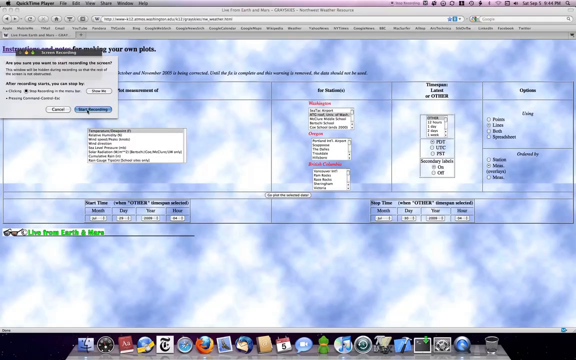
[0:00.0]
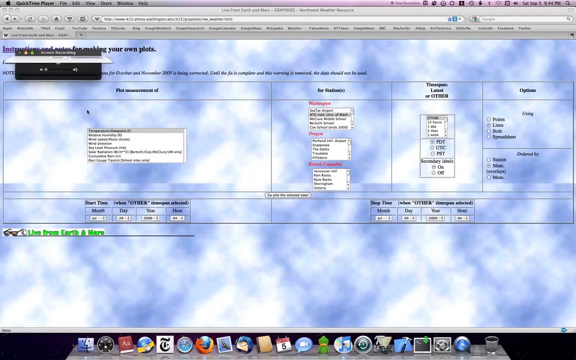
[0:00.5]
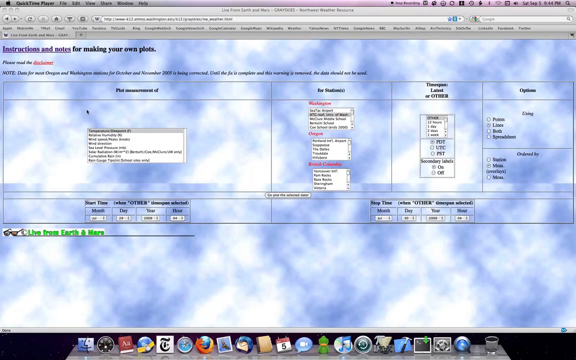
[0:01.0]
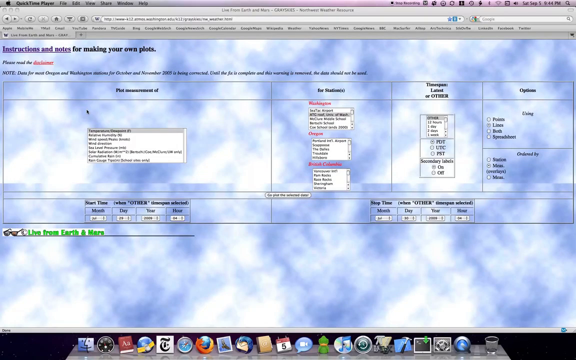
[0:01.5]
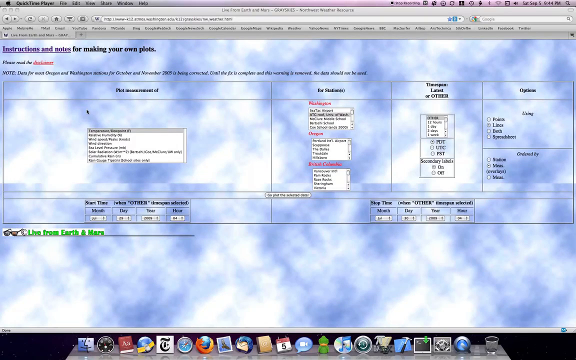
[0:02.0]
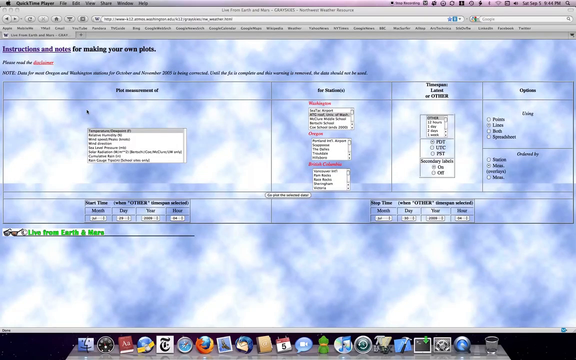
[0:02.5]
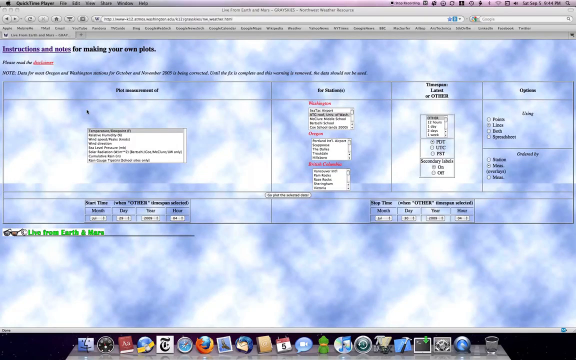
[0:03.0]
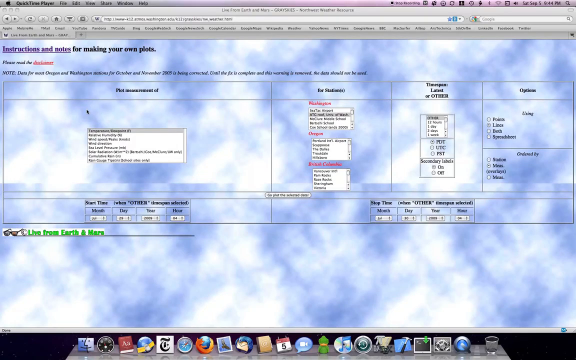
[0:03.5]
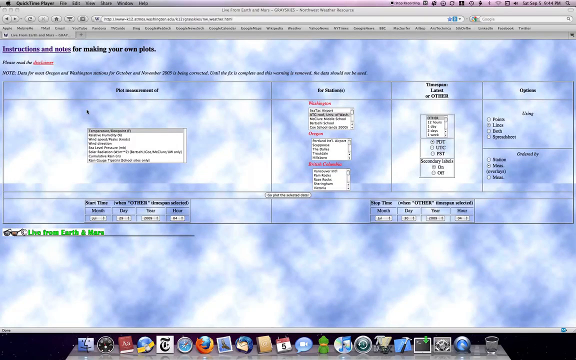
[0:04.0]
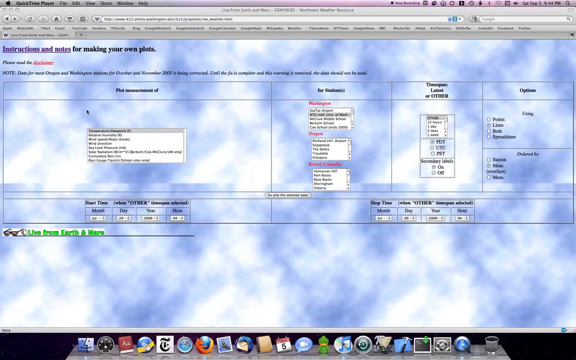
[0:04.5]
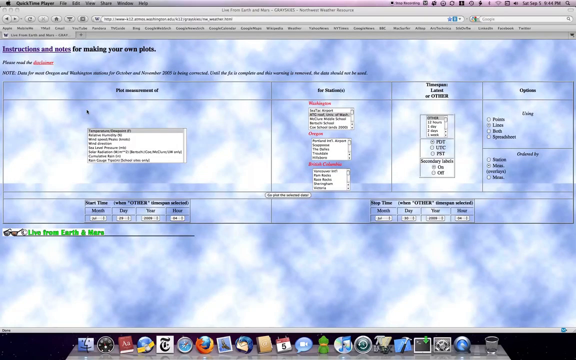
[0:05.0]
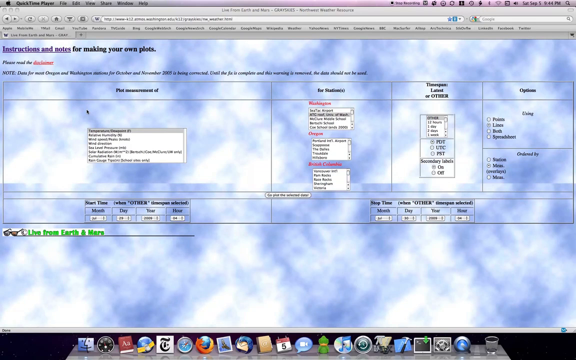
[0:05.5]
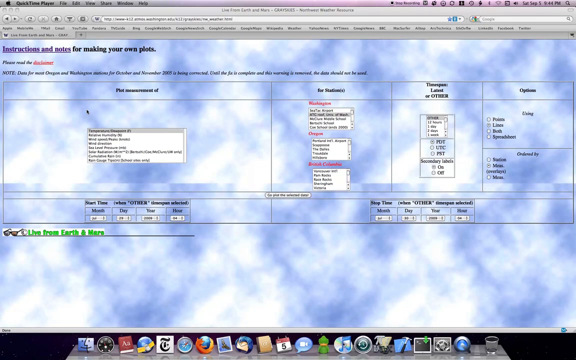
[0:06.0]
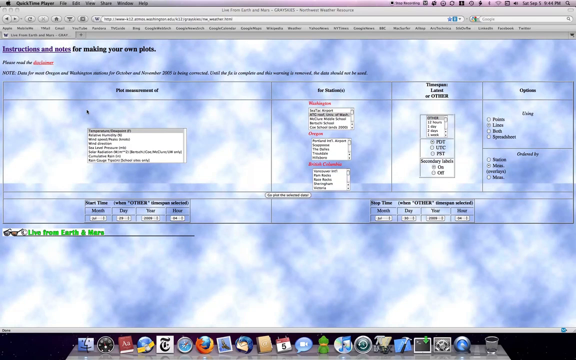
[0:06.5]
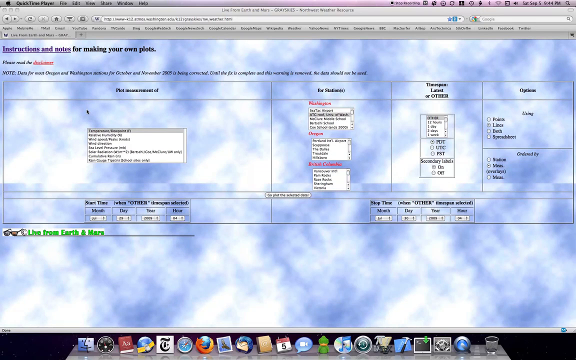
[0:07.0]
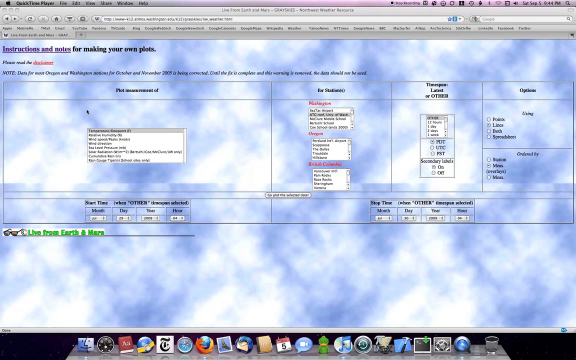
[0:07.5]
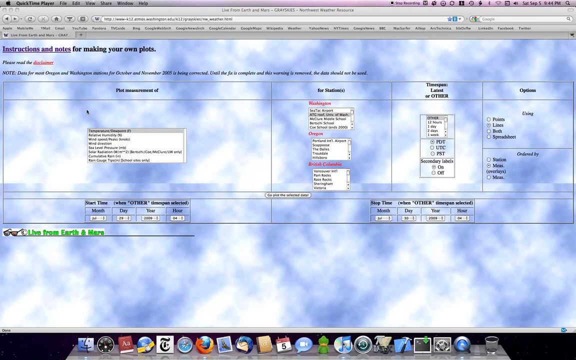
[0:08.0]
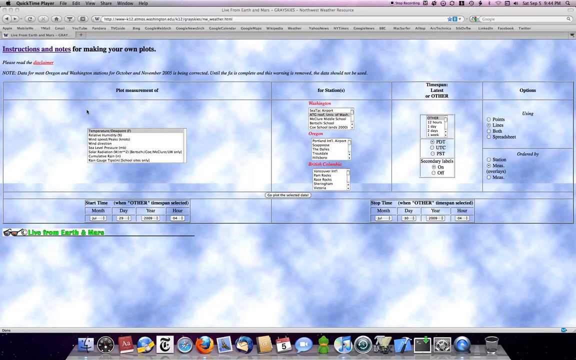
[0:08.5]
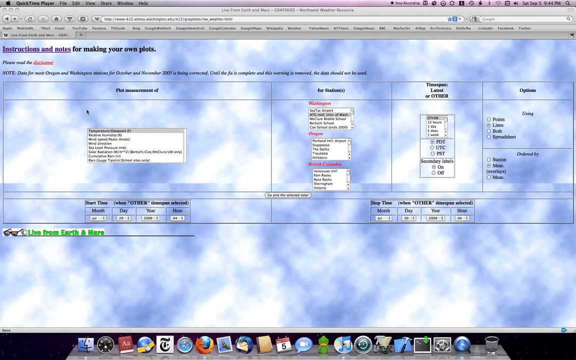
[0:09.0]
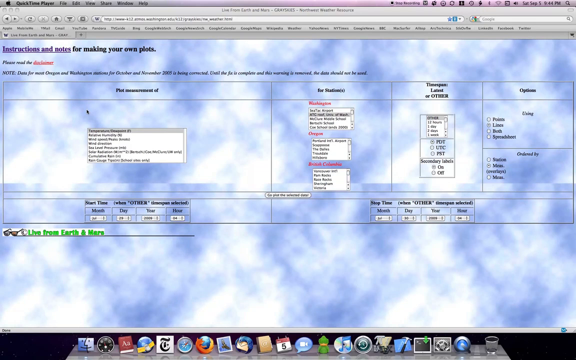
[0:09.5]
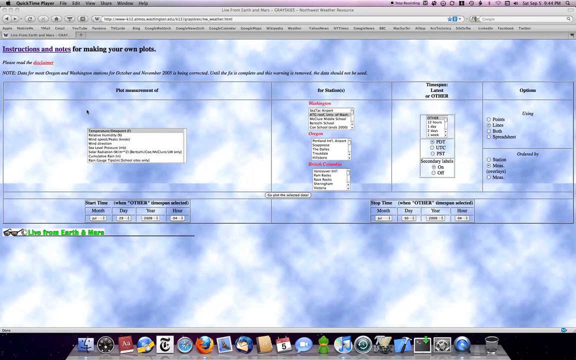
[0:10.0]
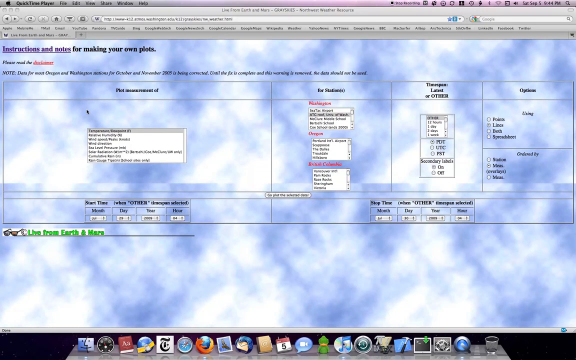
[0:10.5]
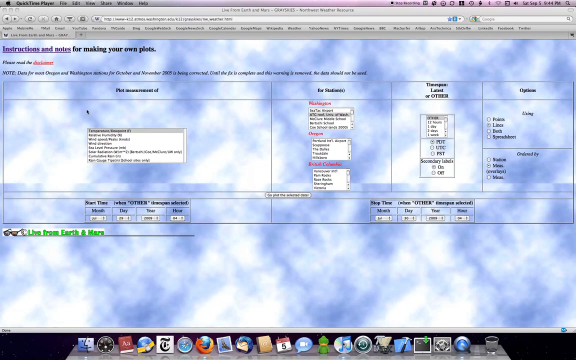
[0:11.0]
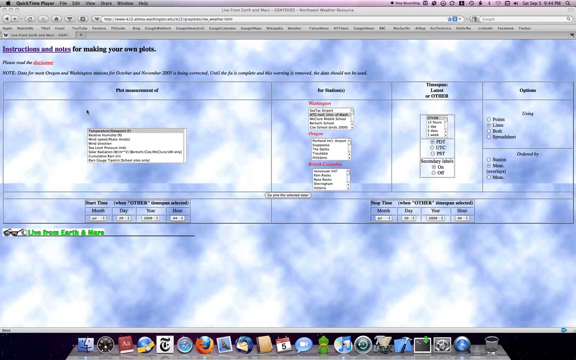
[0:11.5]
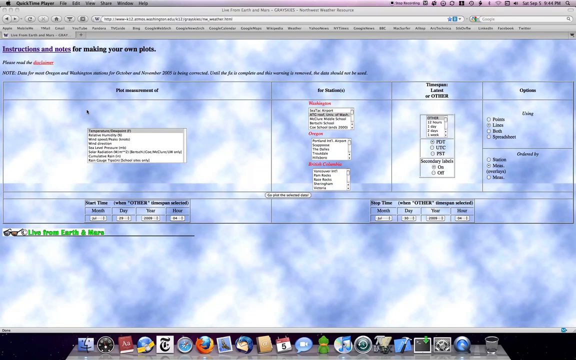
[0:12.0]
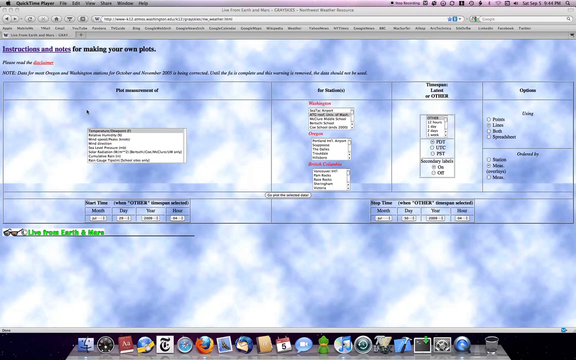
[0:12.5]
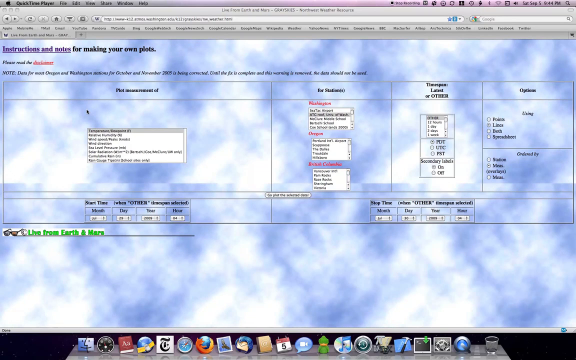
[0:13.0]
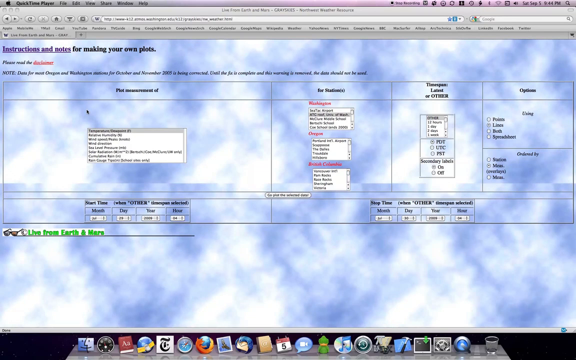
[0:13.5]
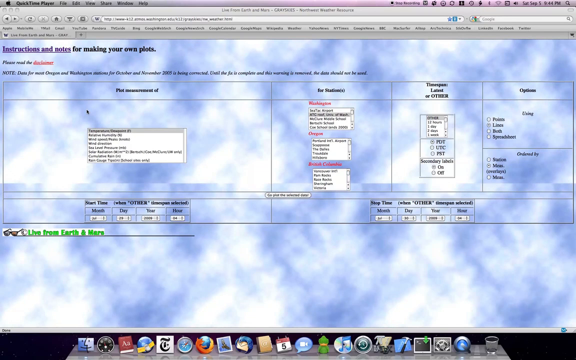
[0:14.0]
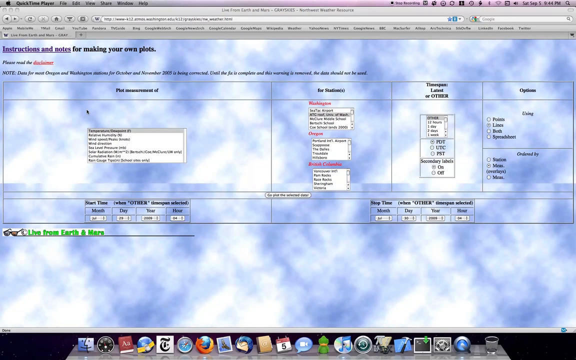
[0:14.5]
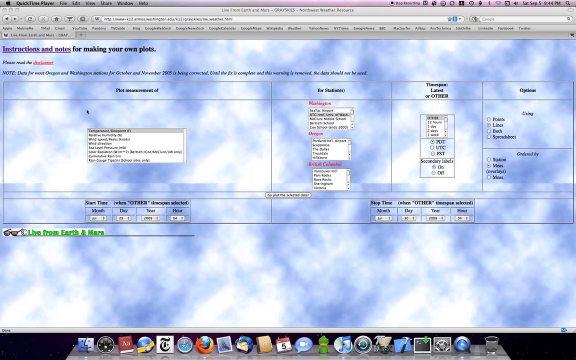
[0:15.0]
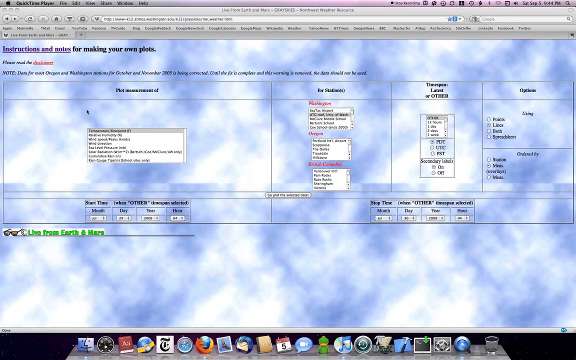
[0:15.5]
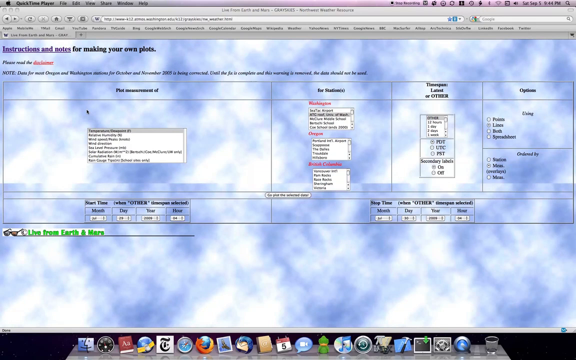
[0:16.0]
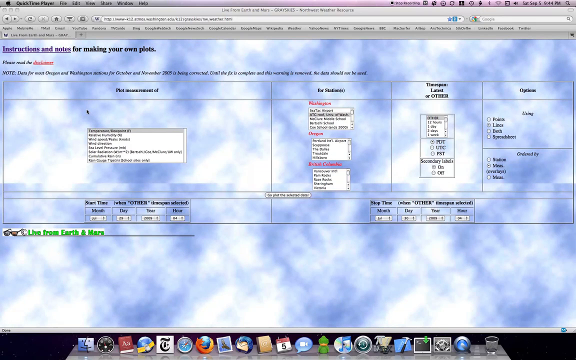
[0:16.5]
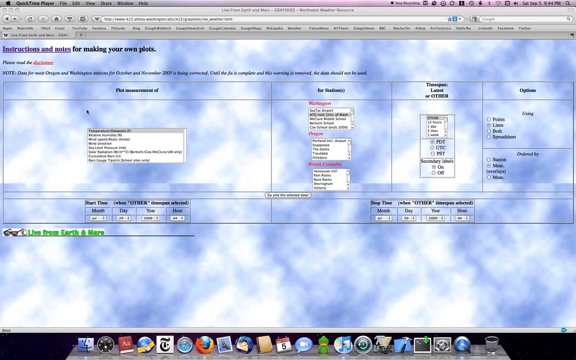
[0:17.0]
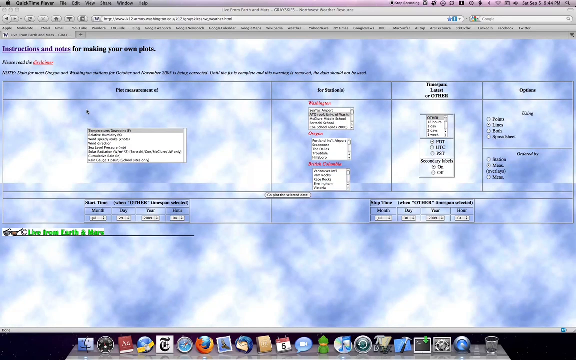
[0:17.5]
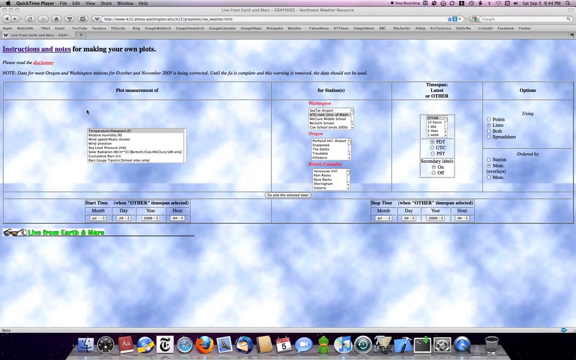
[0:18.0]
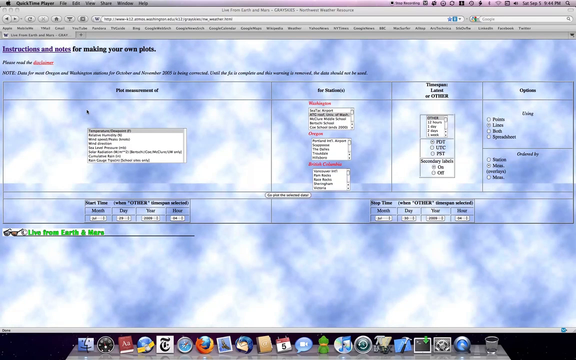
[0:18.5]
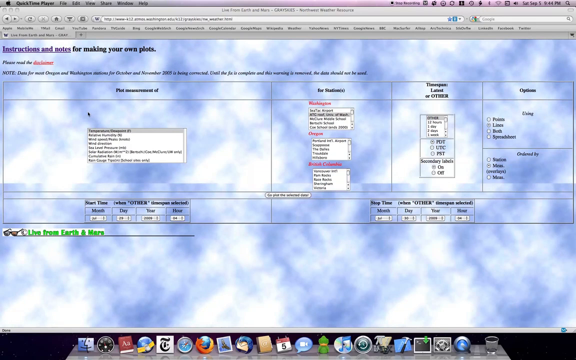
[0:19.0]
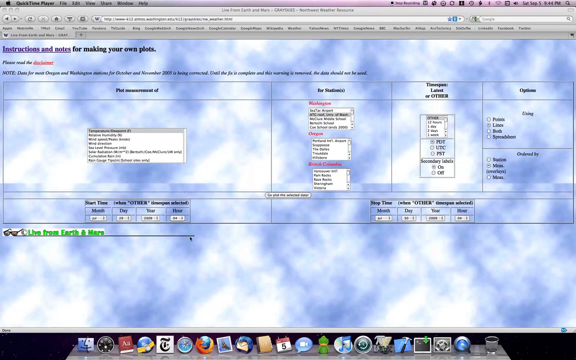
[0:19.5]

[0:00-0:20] A computer desktop shows a blue cloud background with a program open that appears to say "instructions and notes for making your own plots." Someone hits the start recording button on the program, which looks like the QuickTime Player application. It has options, subjects and all sorts of different settings available: it says "plot" and has a drop-down menu of different types of plots, information for the station, time lapse options, and "other." The computer shows the time as "9.44pm" on "Saturday, September 5th." Other programs are also available on the desktop, and the layout of the desktop shows it is a Mac. The applications at the bottom include Finder, Dictionary, Safari, Mozilla, Mail, Calendar, FaceTime, QuickTime Player, New York Times and News, among a whole bunch of others.